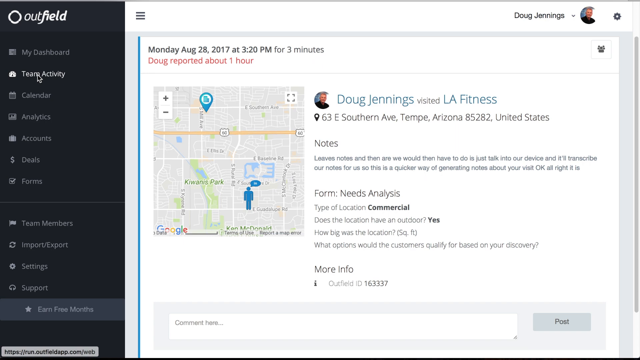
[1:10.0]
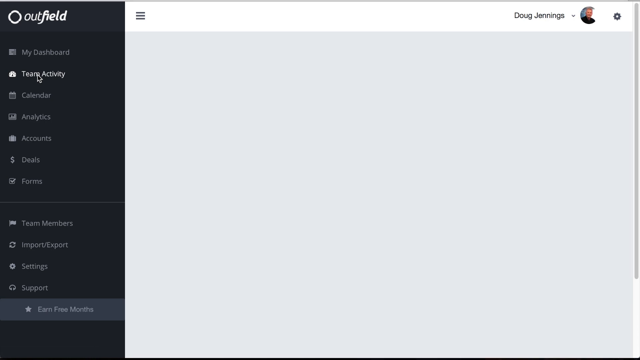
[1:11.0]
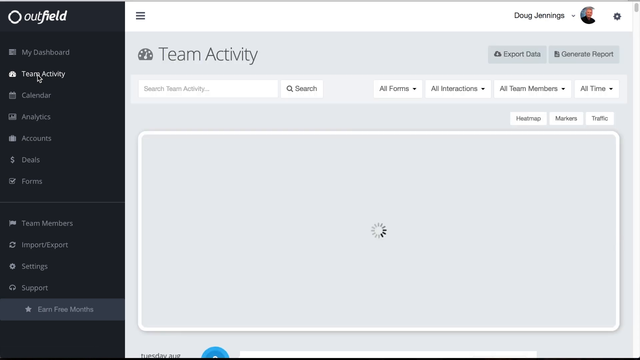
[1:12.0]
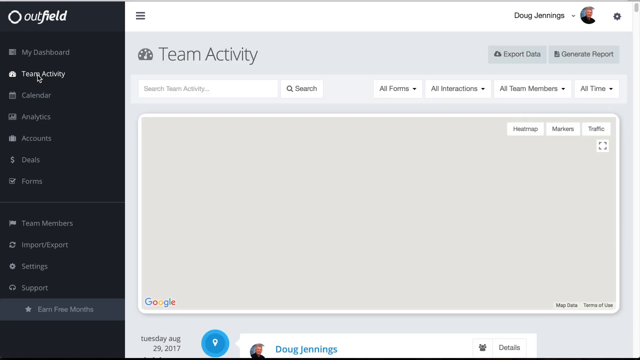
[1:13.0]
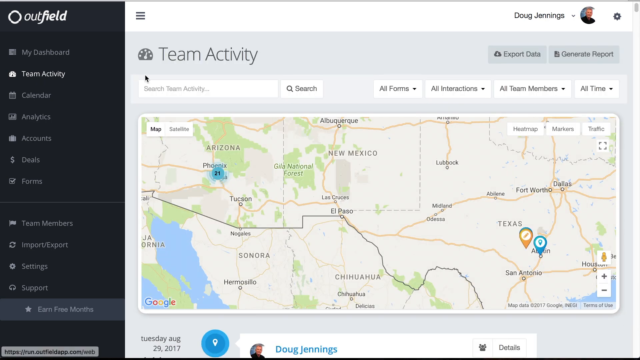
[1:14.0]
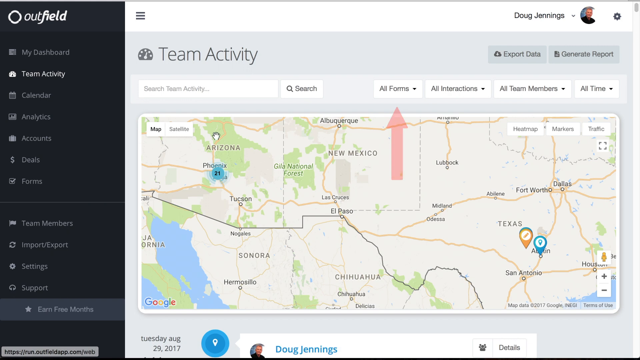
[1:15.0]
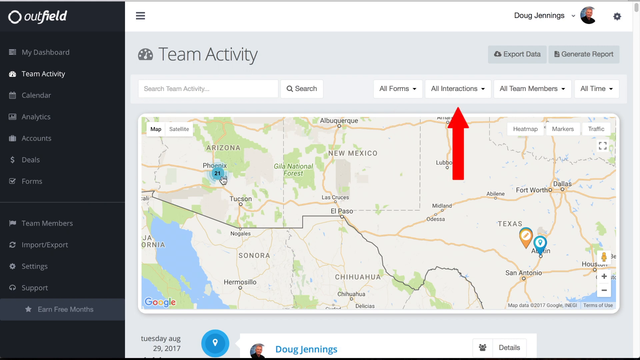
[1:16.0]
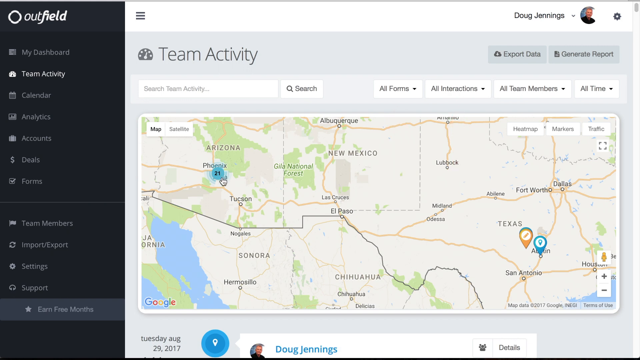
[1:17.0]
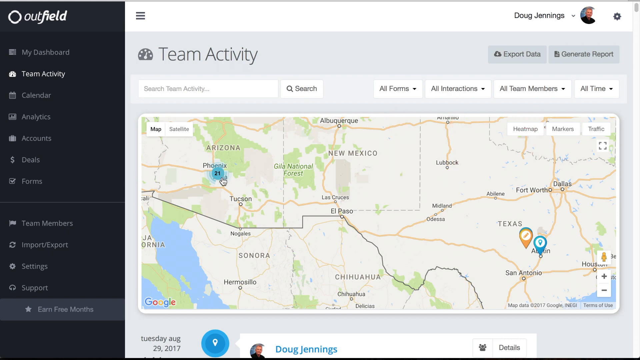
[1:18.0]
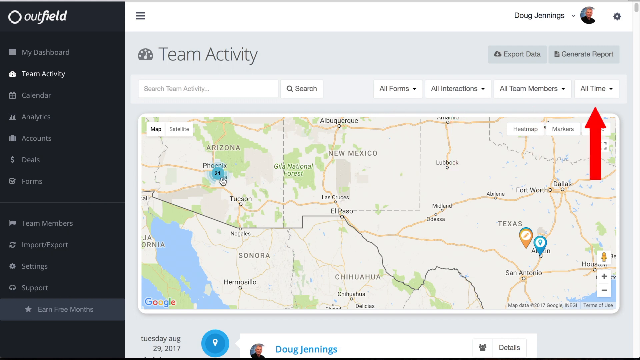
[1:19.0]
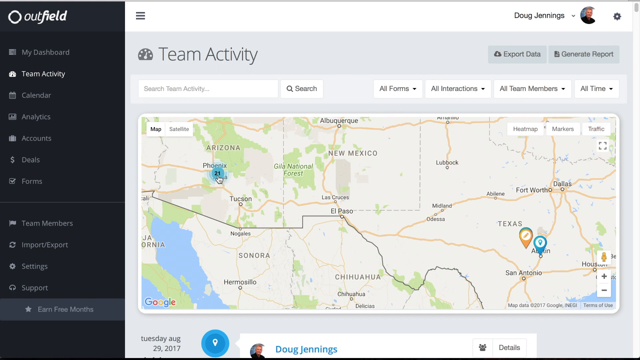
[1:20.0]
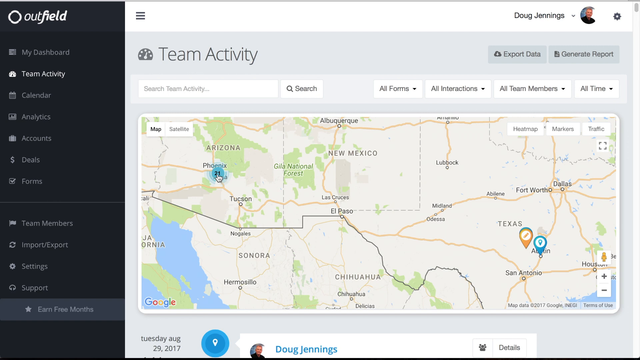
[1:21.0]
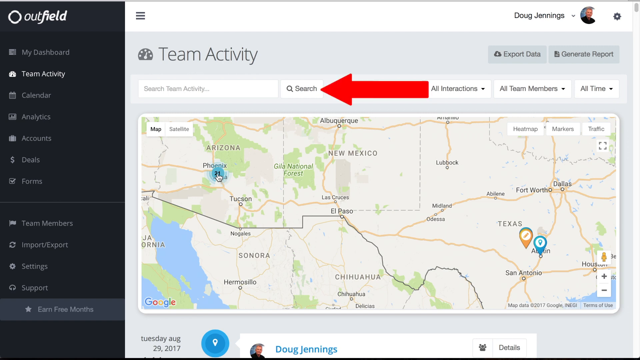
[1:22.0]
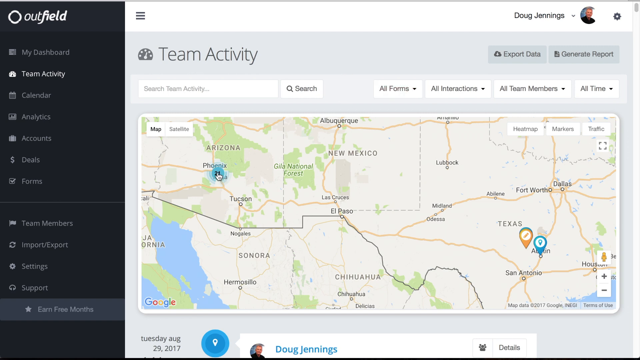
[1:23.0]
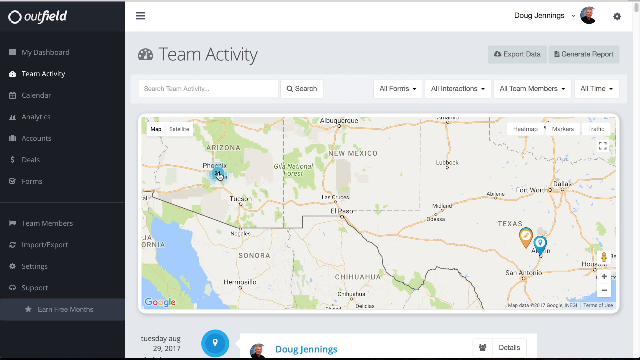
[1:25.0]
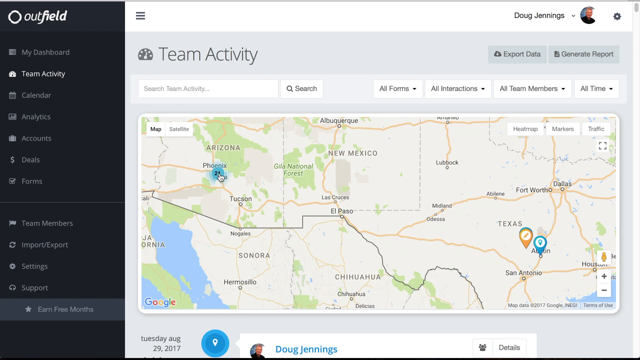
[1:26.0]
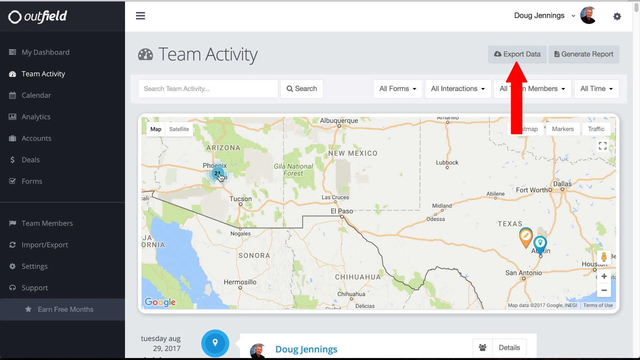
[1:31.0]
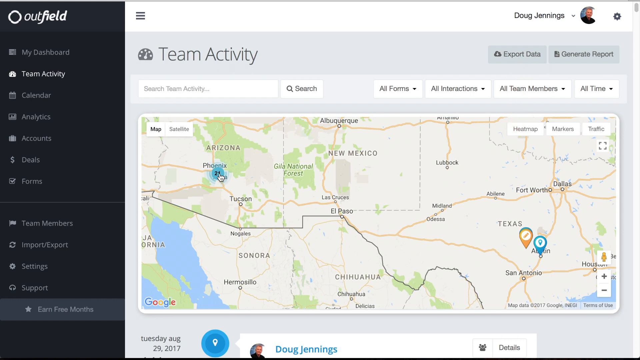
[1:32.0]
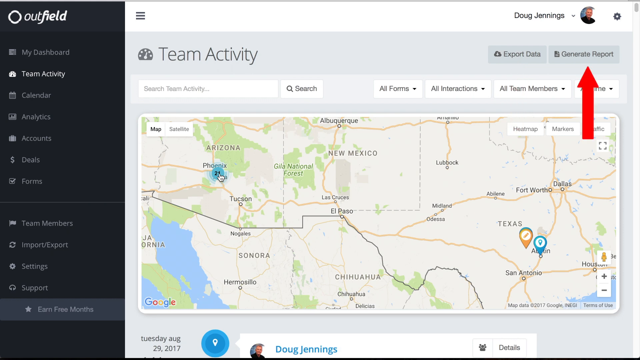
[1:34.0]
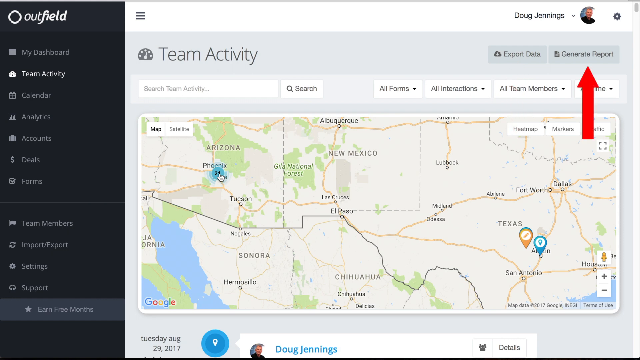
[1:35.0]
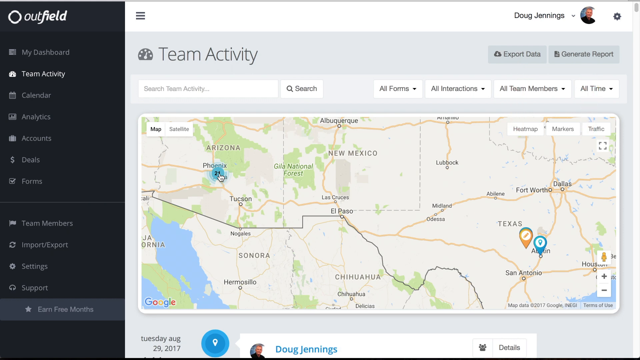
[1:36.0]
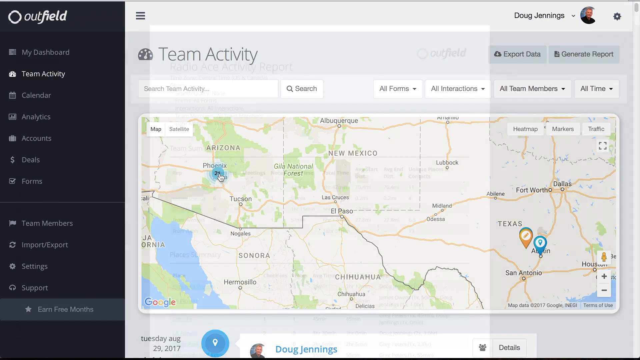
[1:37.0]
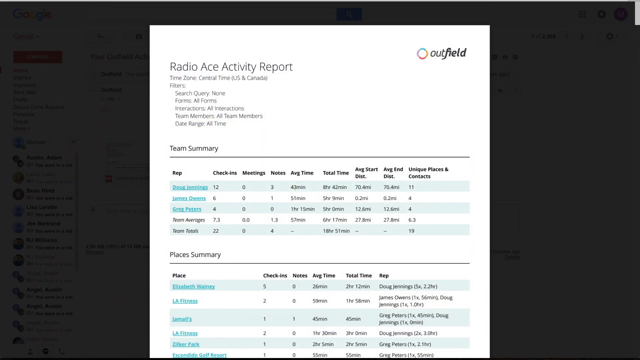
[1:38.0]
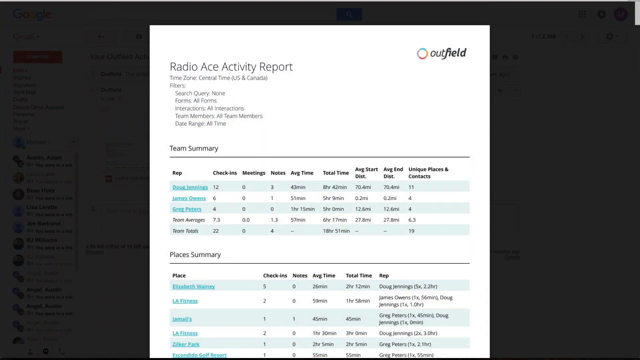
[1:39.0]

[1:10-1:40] The map is smaller now, and what looks like Doug's activity is listed on its right side. Above the map, black text gives a date and time, Monday, August 28th, 2017, at 3:20 p.m., for three minutes, and underneath it red text says "Doug reported about one hour". On the right side of the map it says "Doug Jennings visited LA Fitness", with the address 63 East Southern Avenue, TEMPE, Arizona, 85282, United States, and options to leave notes and get more info. Then that panel goes blank as the person clicks on team activity. A red arrow points first to "all interactions", "all team members" and "all time", then to search. The number 21 appears near Phoenix, Arizona, with the mouse hovering over it. A red arrow then points up to "export data" and "generate report" on the upper right-hand side. The person apparently clicks on the report, since the screen now shows "radio ace" followed by a third word that is not made out.